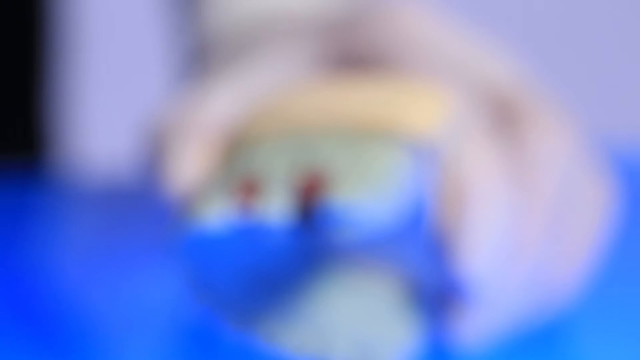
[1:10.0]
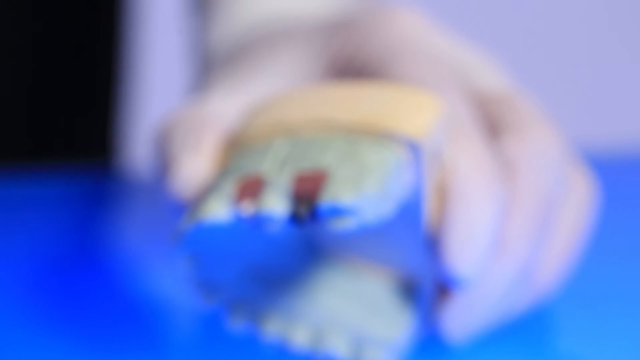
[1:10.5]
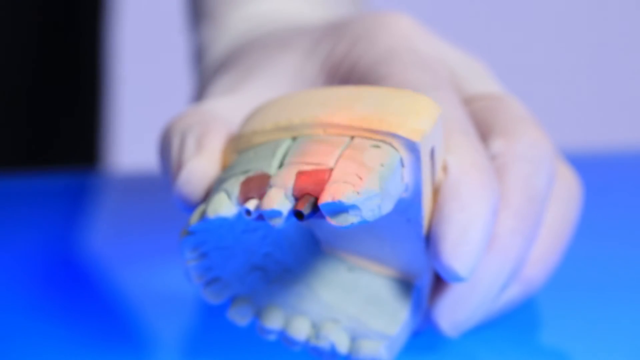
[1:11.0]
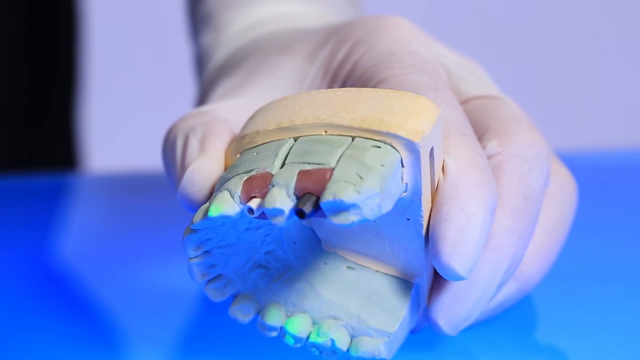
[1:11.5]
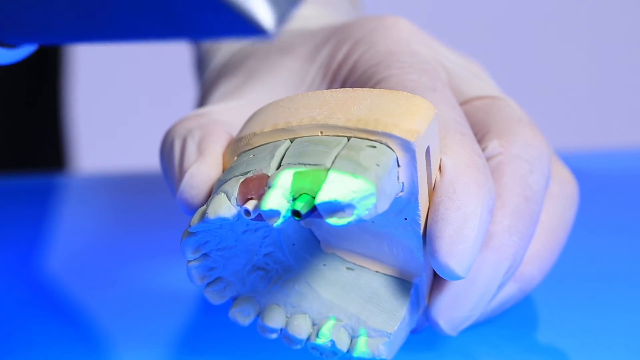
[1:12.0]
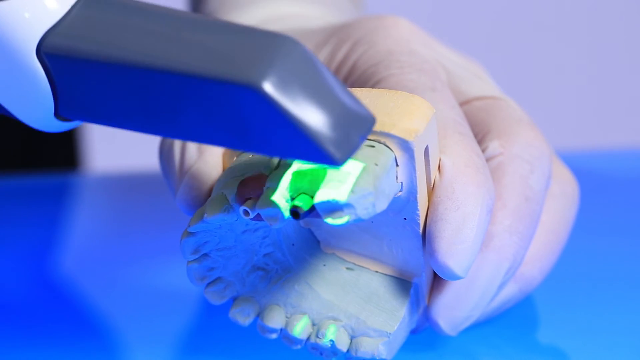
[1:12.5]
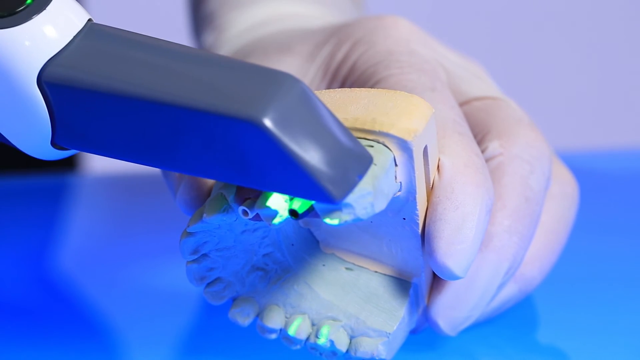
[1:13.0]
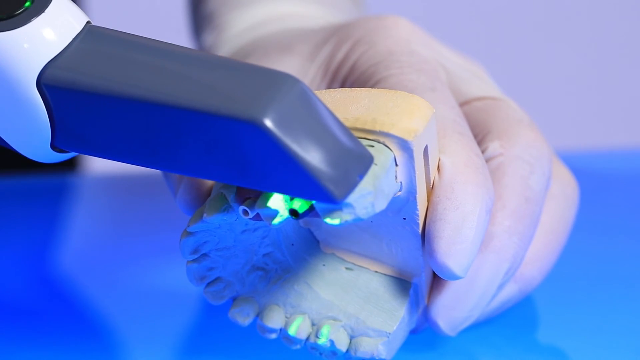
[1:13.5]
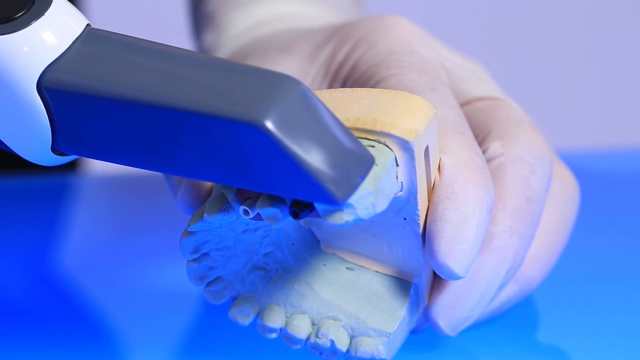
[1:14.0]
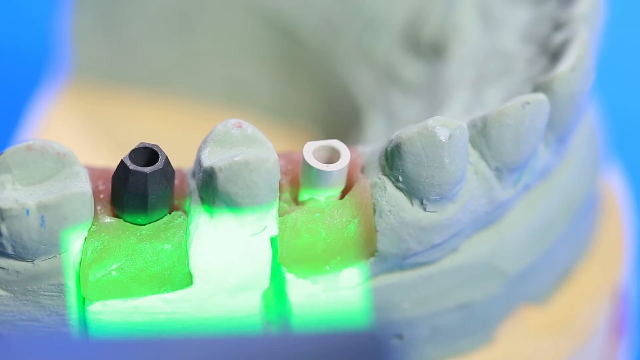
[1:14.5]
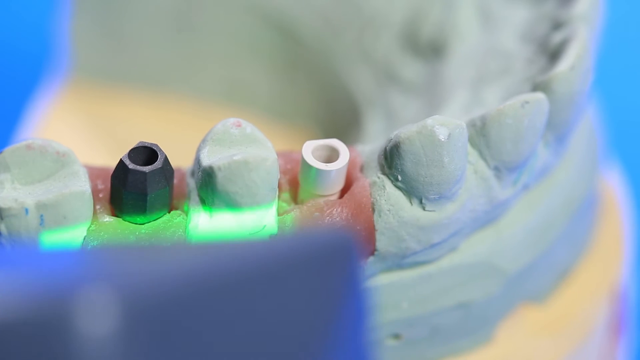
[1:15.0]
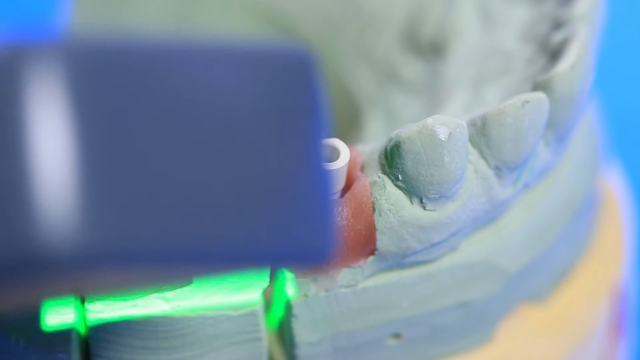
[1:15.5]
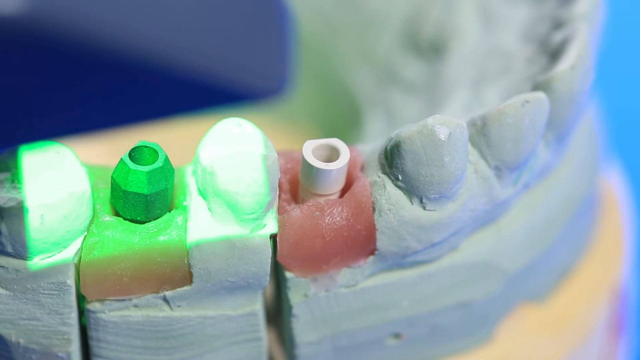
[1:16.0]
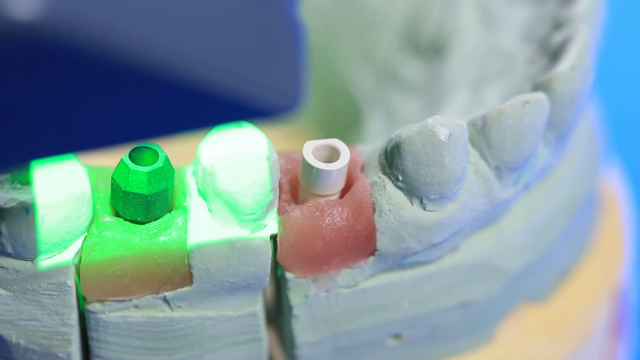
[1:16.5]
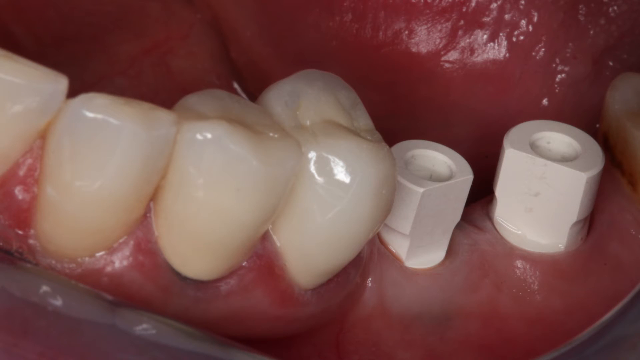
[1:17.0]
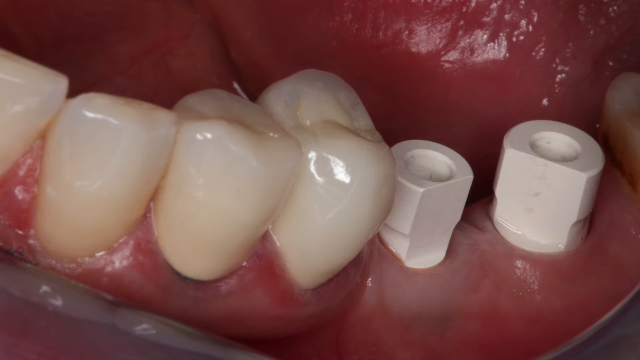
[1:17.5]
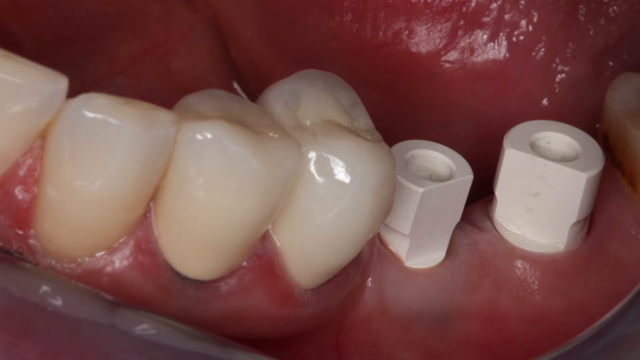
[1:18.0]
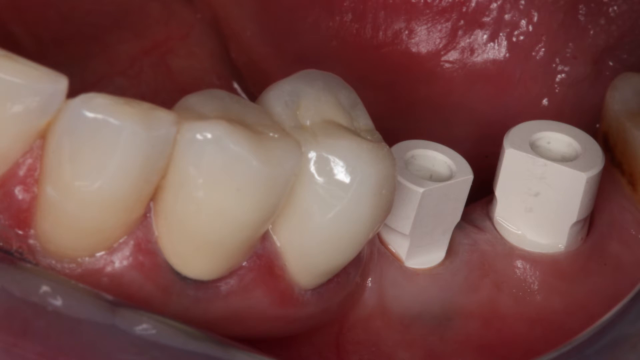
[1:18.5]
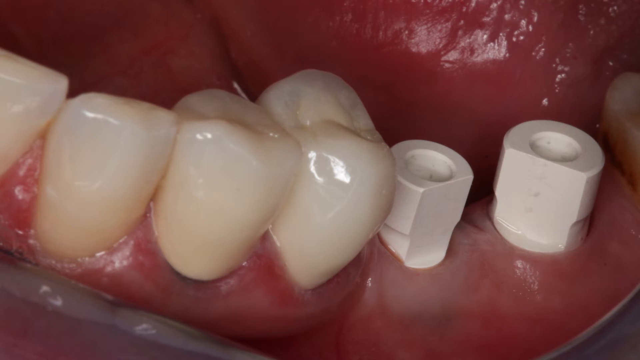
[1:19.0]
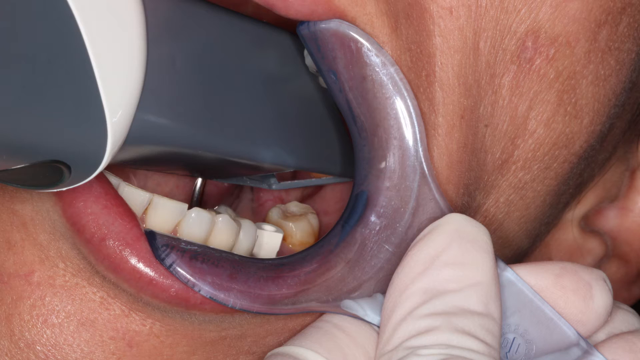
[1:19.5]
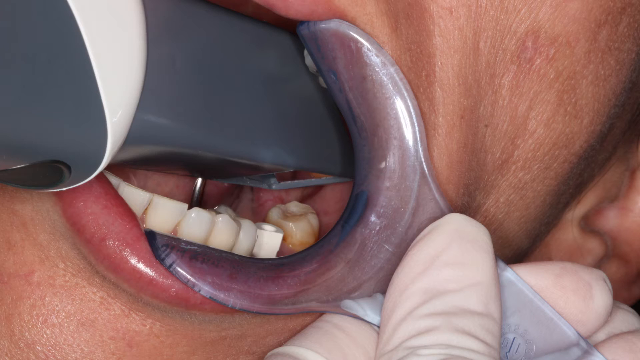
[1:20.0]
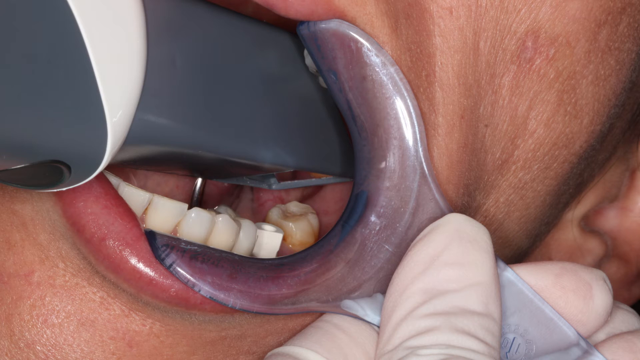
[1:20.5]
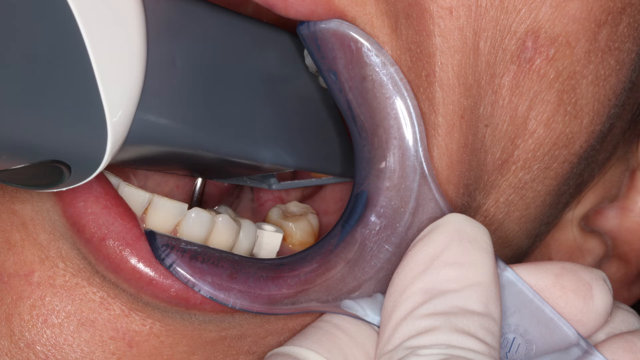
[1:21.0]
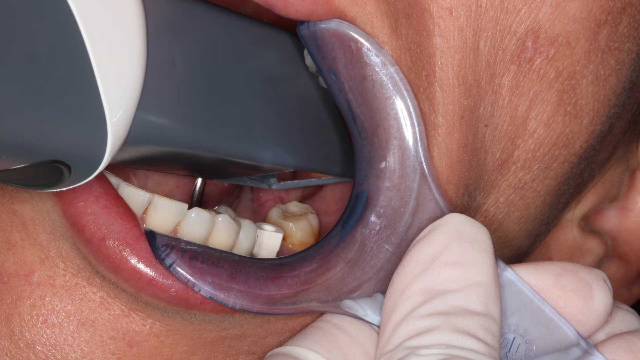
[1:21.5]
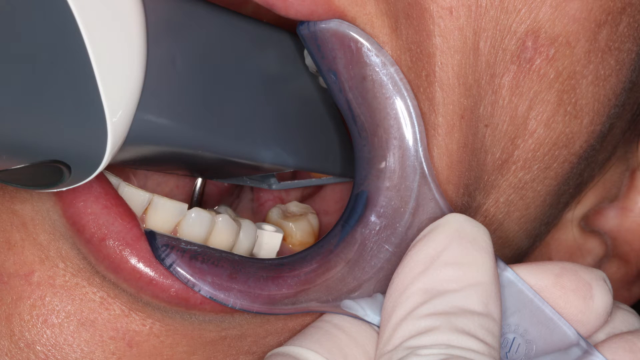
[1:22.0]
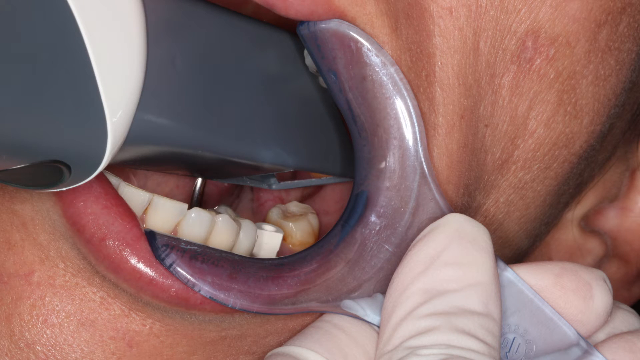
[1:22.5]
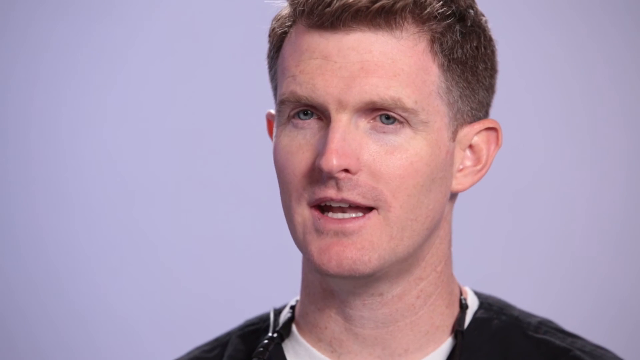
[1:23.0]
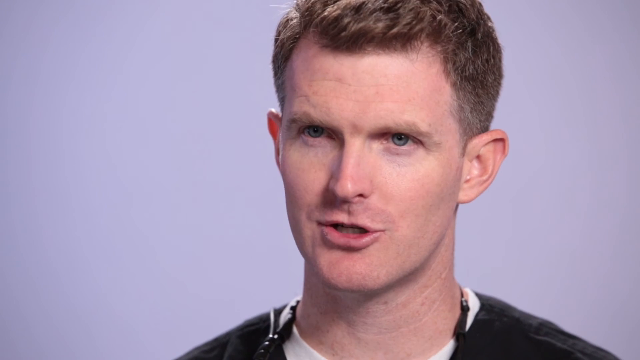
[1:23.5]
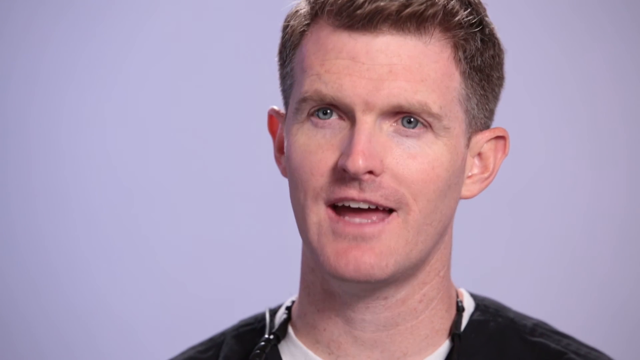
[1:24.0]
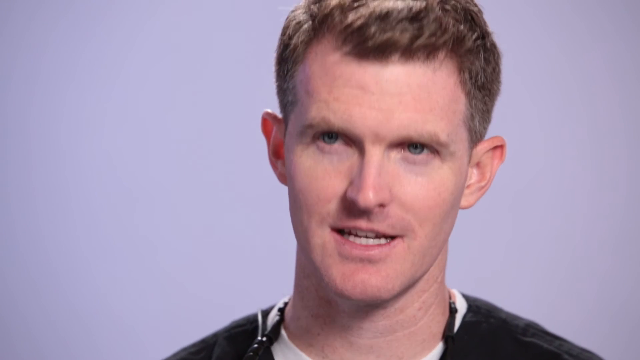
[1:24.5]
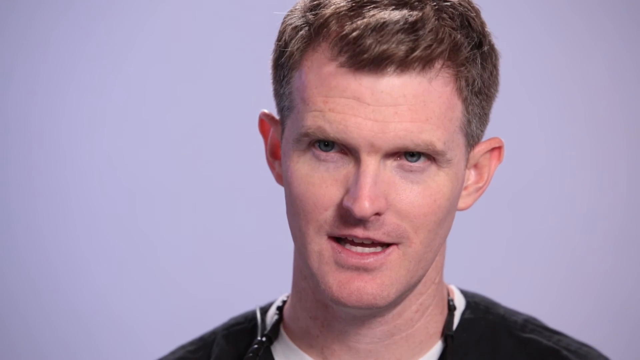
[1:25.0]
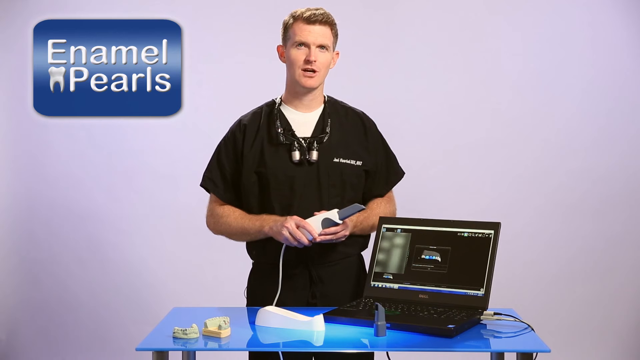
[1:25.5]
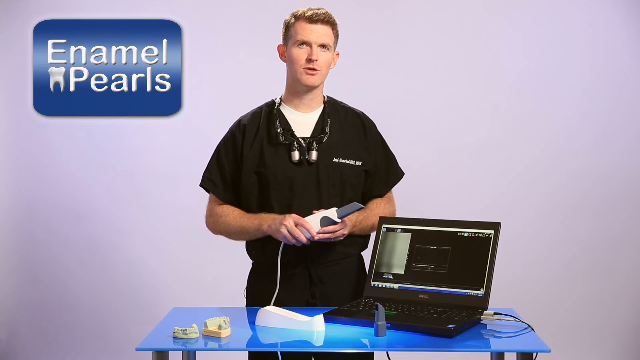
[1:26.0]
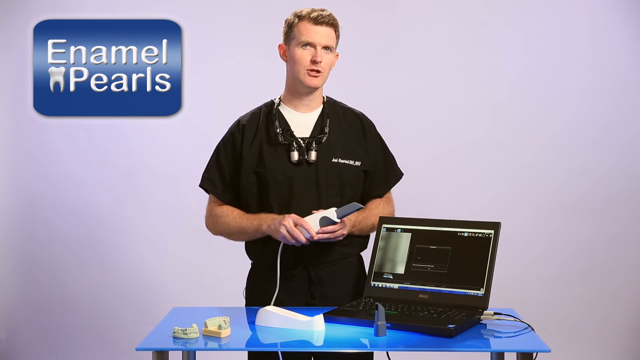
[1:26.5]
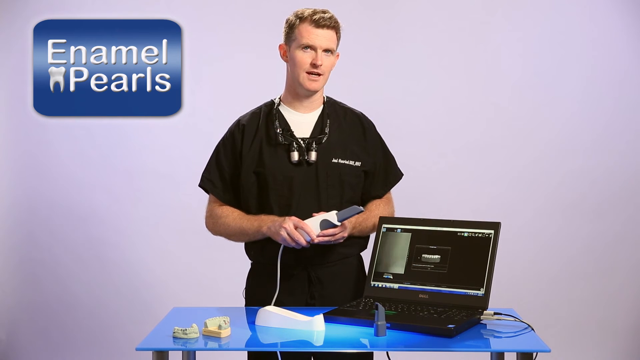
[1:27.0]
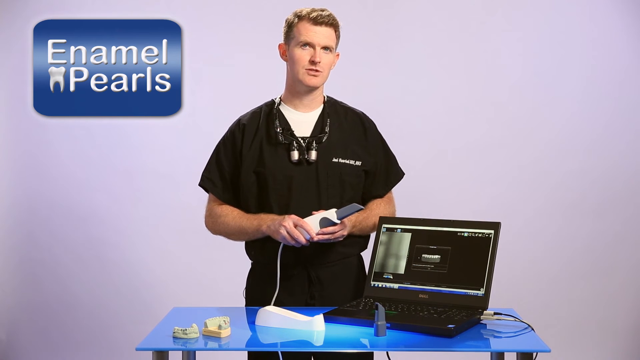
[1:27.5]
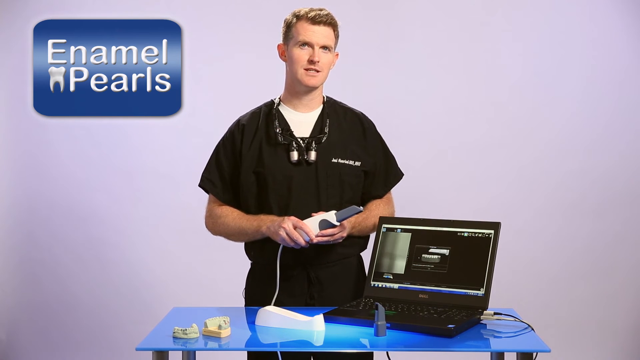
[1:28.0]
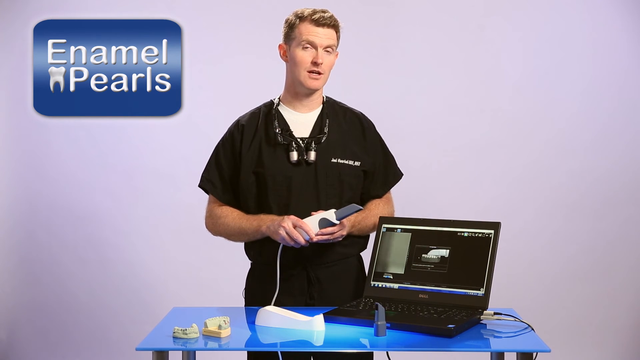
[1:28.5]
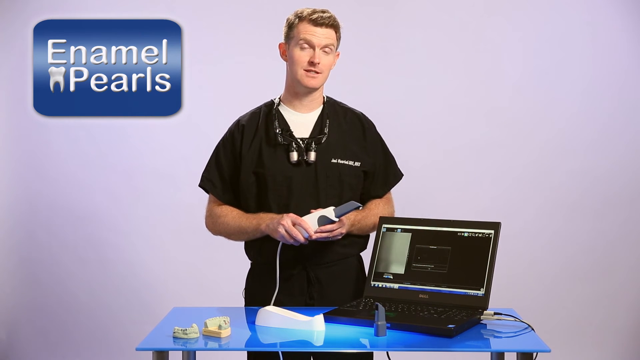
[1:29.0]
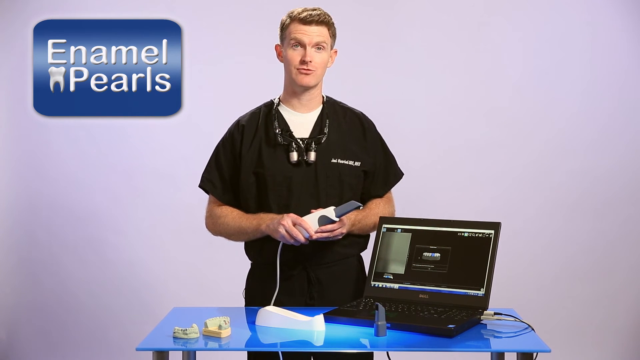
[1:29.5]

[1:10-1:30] A left hand in a white glove holds a mold of teeth that is on a table, while the right hand uses the device seen earlier with the doctor/dentist. The device is put on top of the back teeth of the mold to scan them. The video cuts to another angle where the device shines what looks like a blue light on the mold, and images taken by the device in people's mouths are shown. The video cuts to a shot of the doctor's face as he talks to the camera, then to a wider shot of him speaking in front of the camera, holding the device in both hands, with the laptop in view.